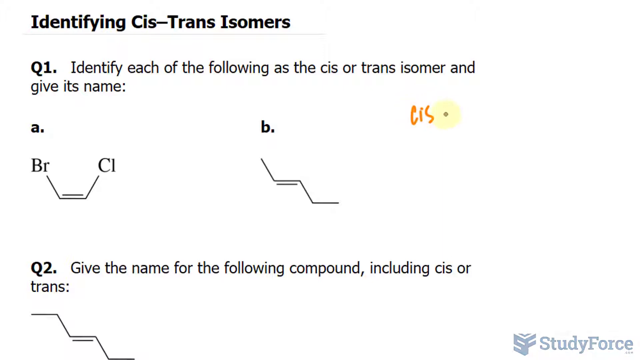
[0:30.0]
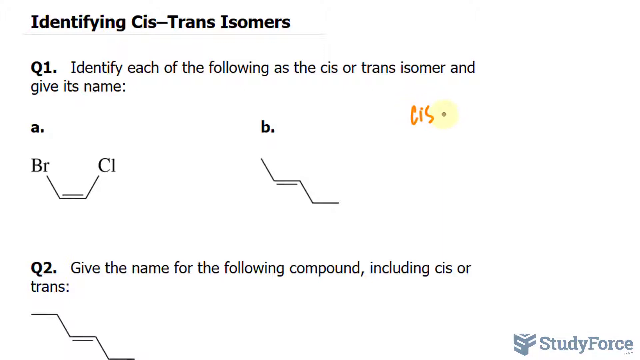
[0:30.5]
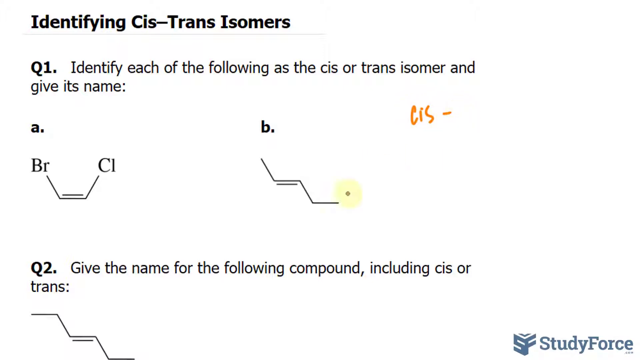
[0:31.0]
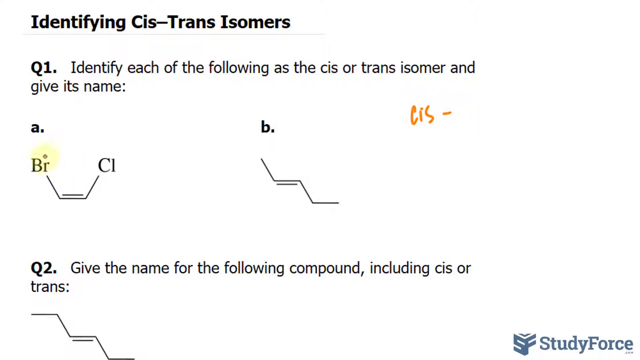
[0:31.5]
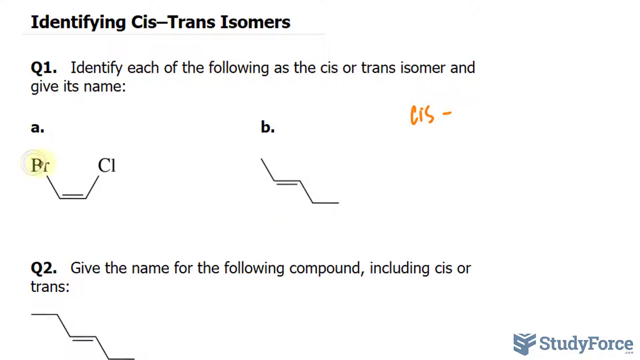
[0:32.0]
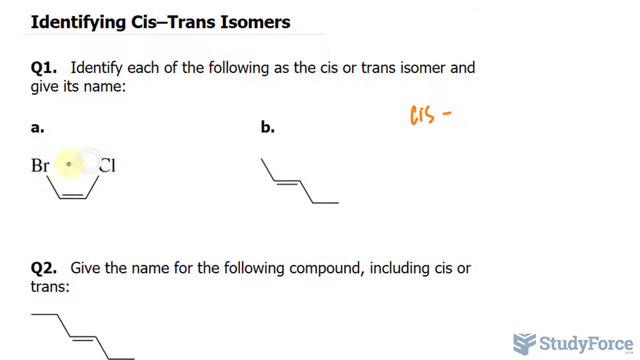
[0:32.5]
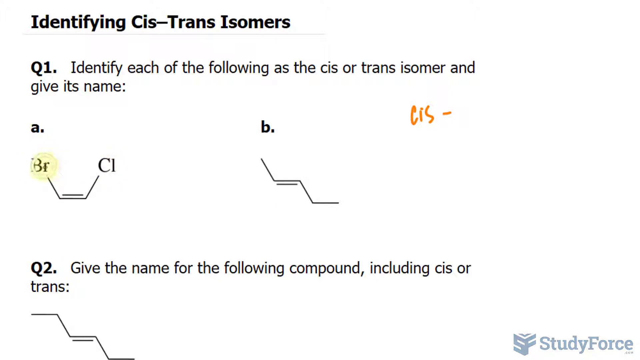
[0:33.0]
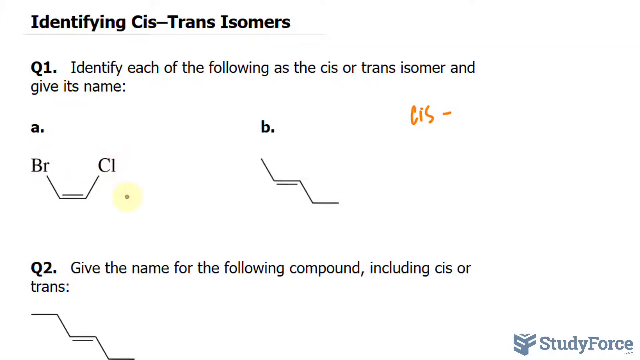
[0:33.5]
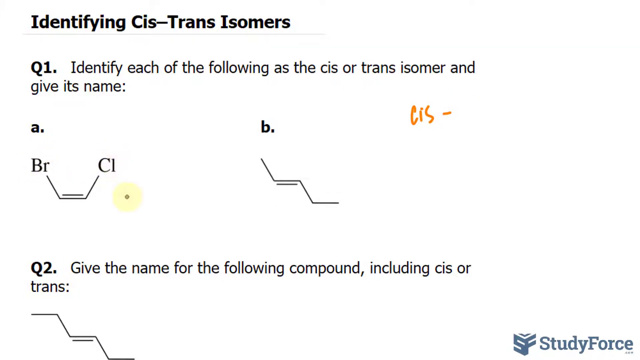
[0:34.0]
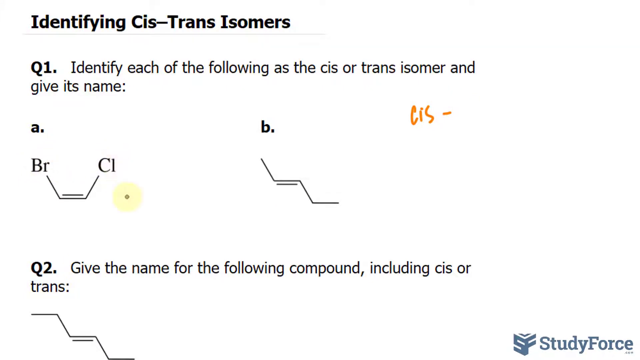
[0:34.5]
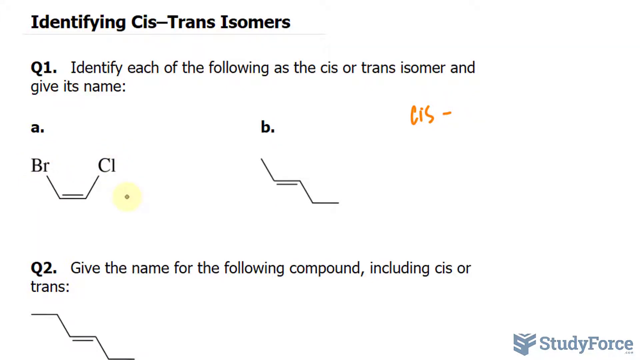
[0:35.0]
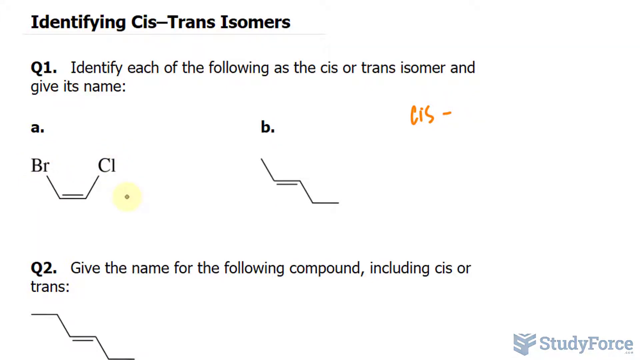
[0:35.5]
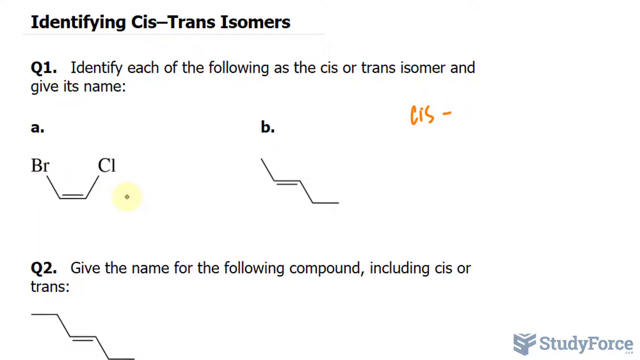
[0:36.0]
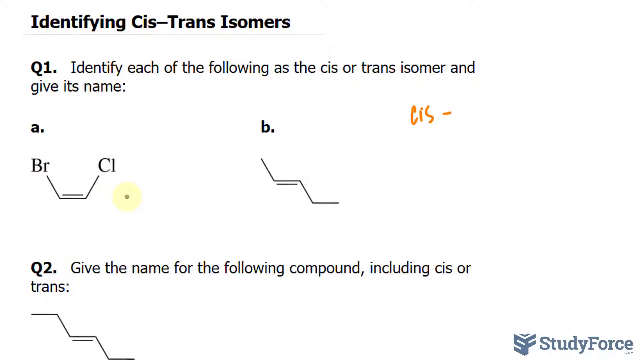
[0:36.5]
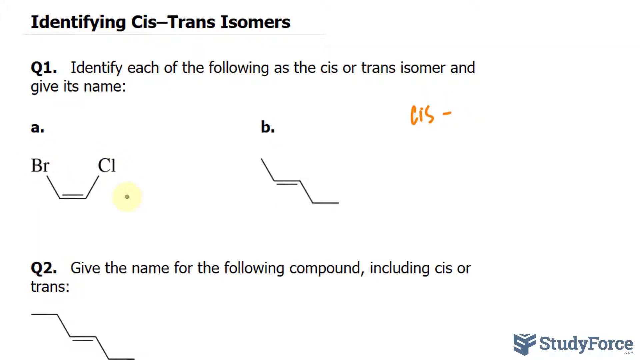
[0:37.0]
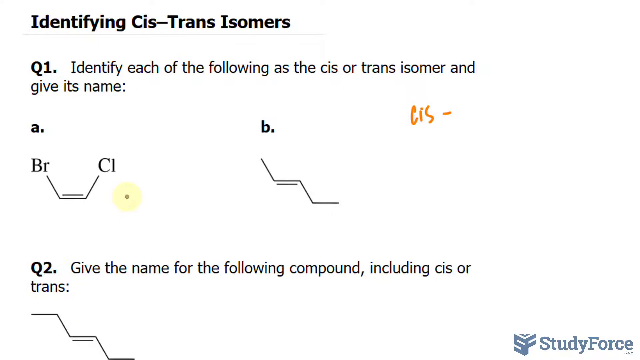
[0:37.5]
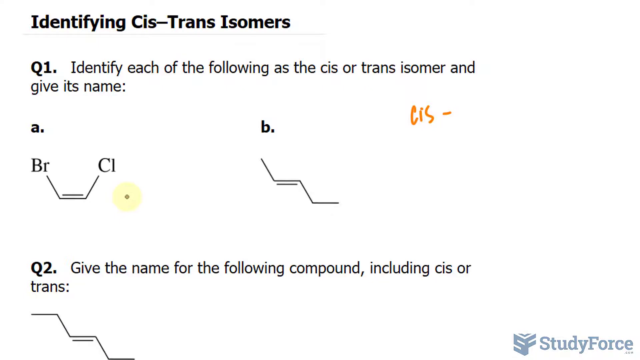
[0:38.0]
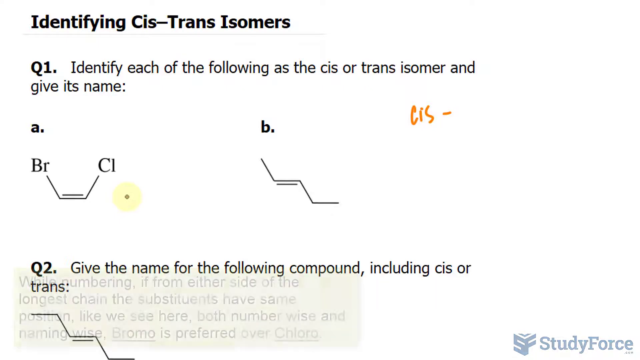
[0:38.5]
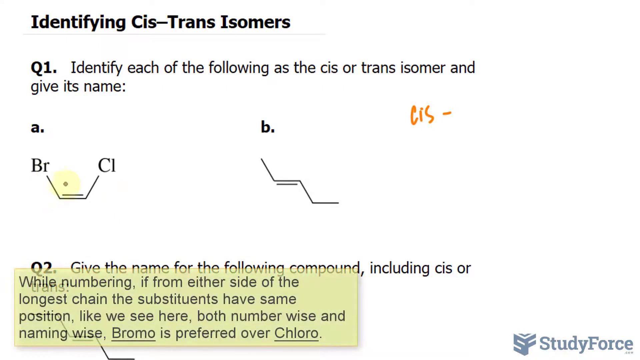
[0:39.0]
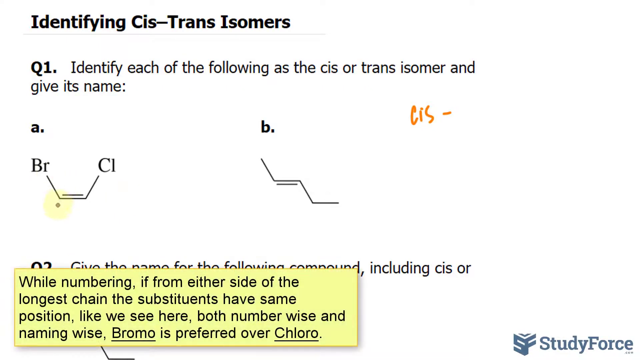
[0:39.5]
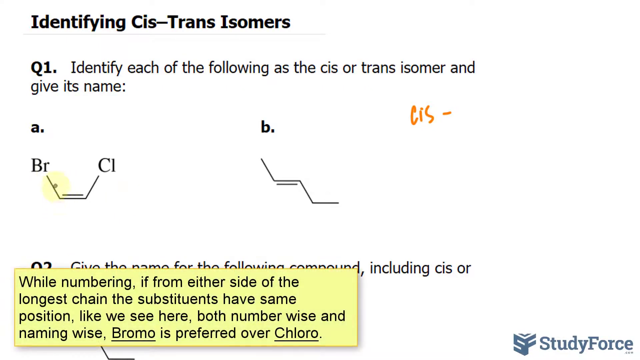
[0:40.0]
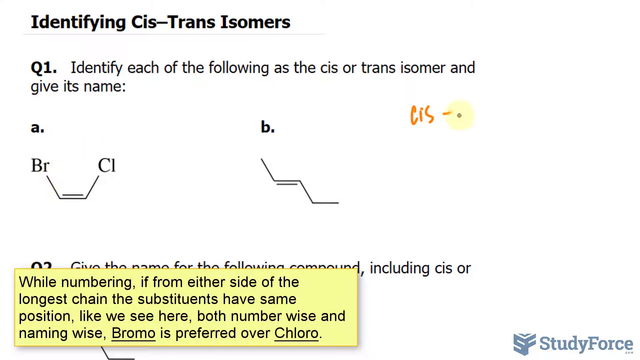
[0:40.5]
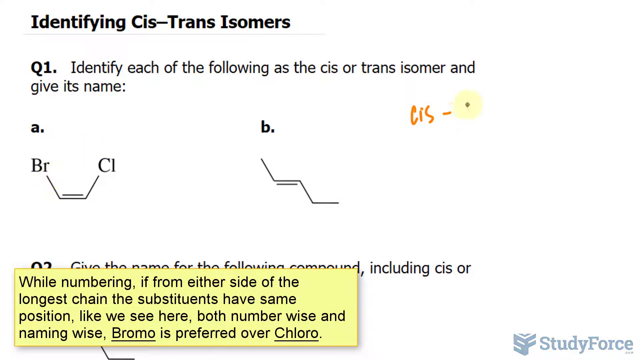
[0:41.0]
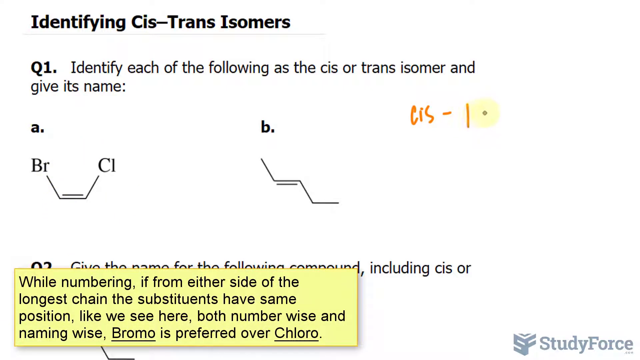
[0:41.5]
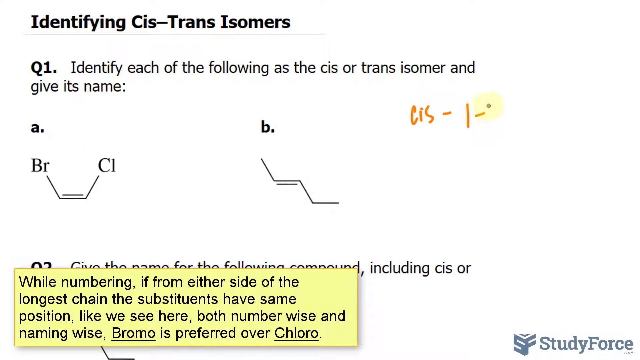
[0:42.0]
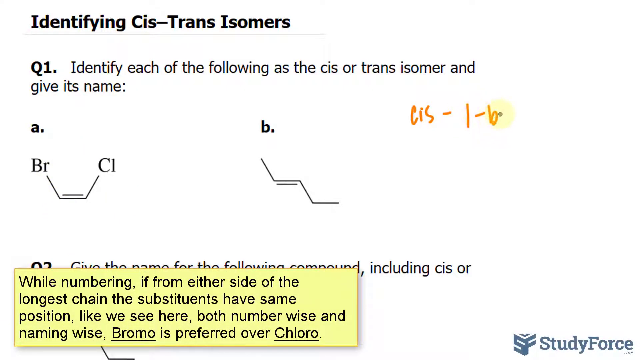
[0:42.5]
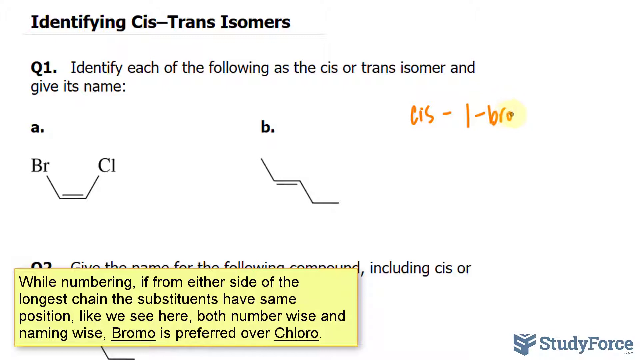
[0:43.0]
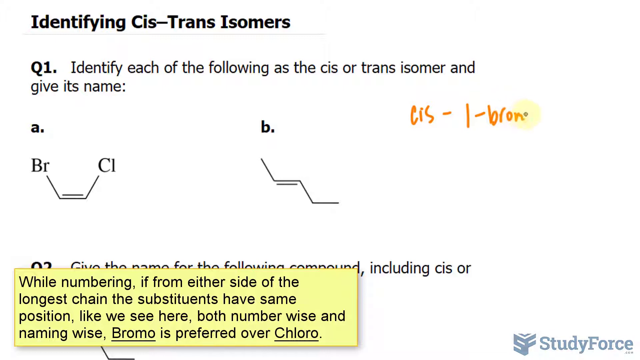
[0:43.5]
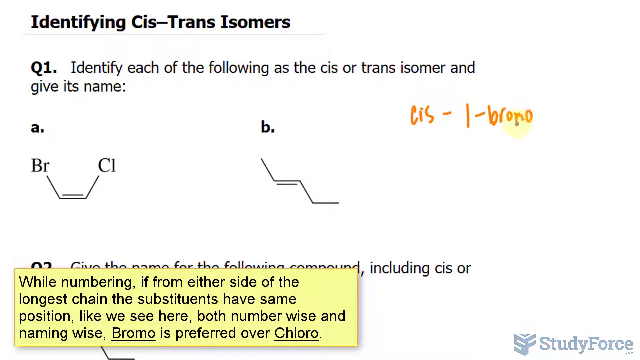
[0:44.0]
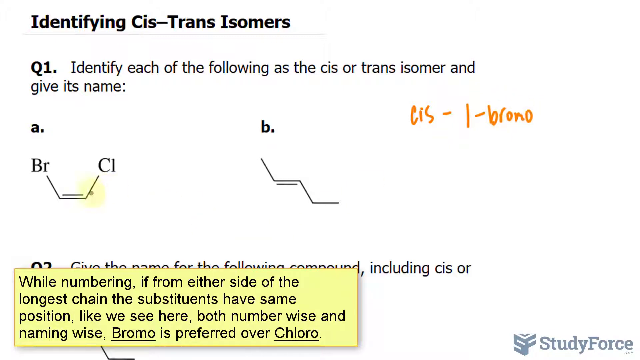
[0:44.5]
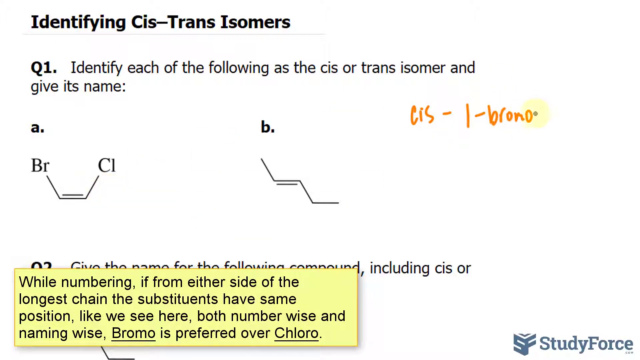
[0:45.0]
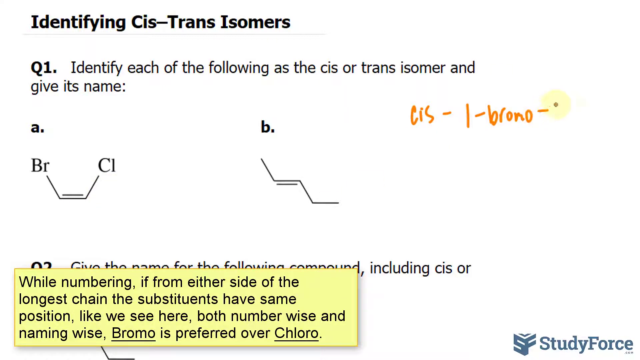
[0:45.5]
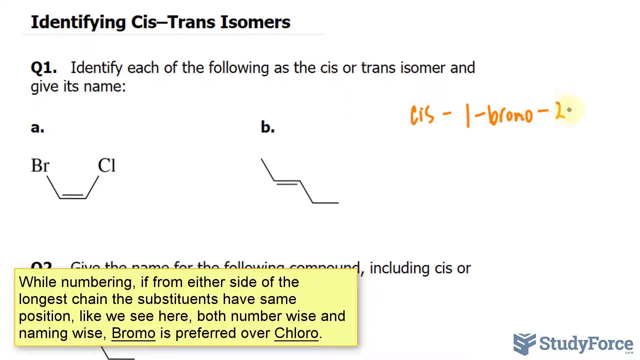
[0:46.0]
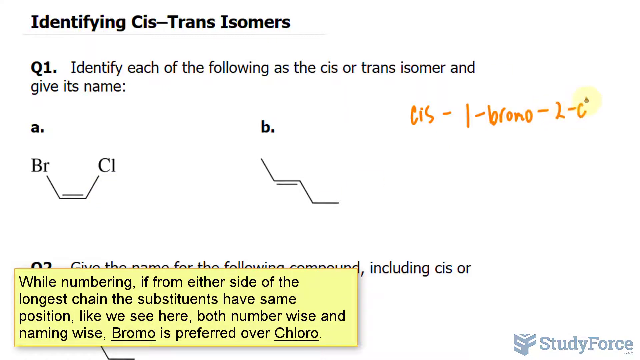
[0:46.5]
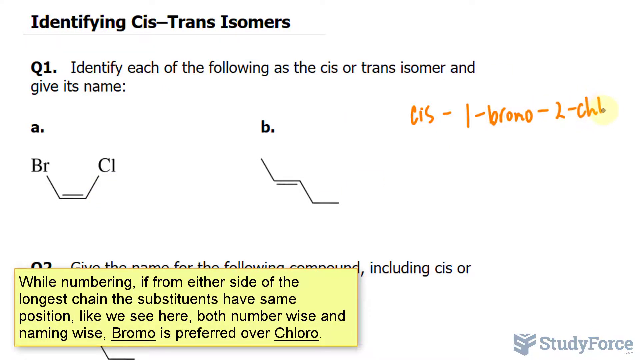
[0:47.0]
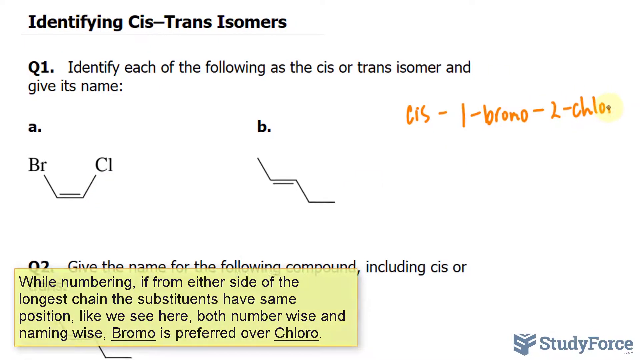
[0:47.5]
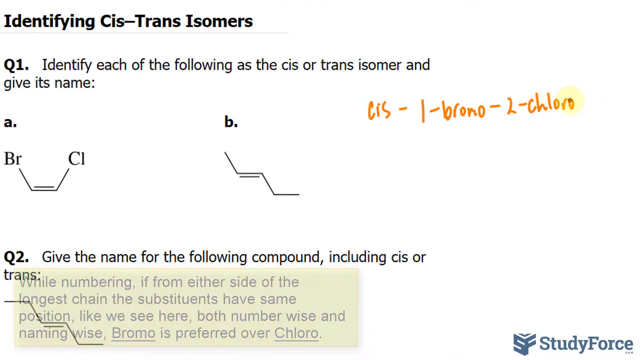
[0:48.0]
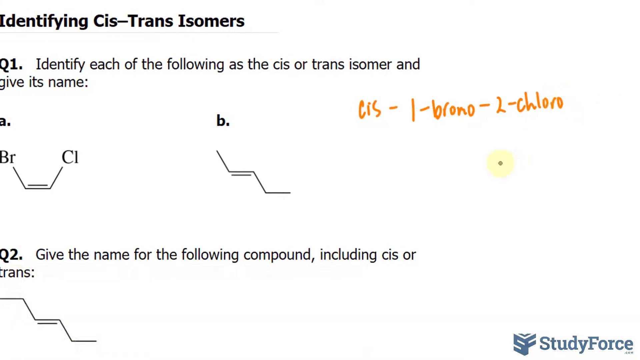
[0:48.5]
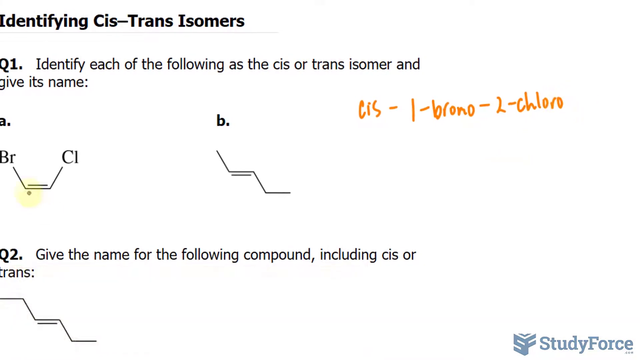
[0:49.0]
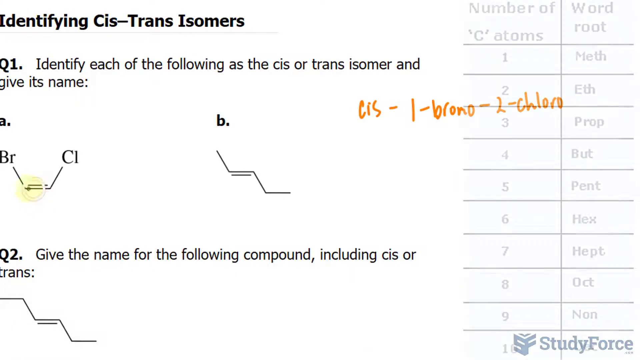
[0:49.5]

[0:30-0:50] The cursor, a very small circle with a larger yellow concentric circle, is on screen. A few seconds in, a yellow rectangle with black writing inside appears in the lower left part of the frame. Meanwhile, in the upper right part of the frame, the cursor writes some words in orange. In the last seconds, a table with several values appears in the upper right part of the frame. The table has a blue background and black text. Its upper left part shows the number of carbon atoms, and its upper right part shows the root of the corresponding word. The other cells contain numbers from 1 to 10 on the left and several words on the right.